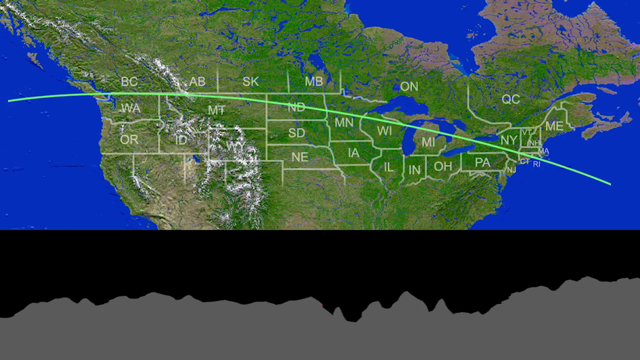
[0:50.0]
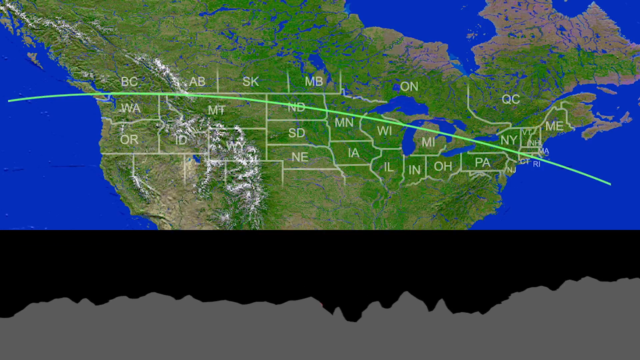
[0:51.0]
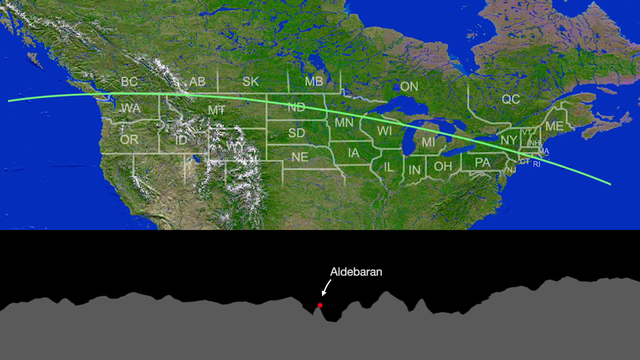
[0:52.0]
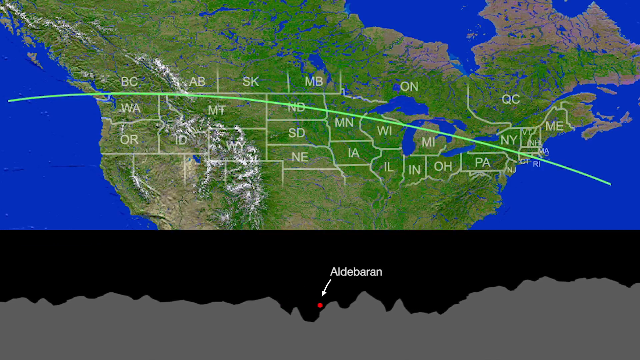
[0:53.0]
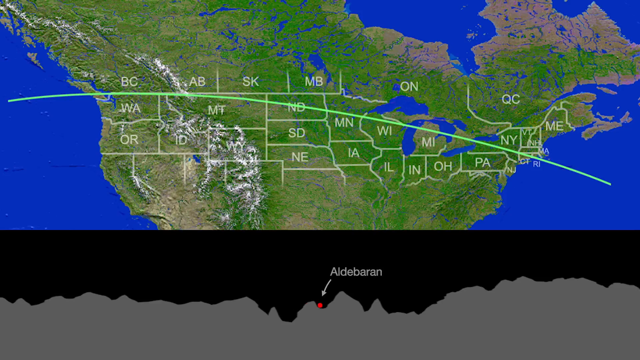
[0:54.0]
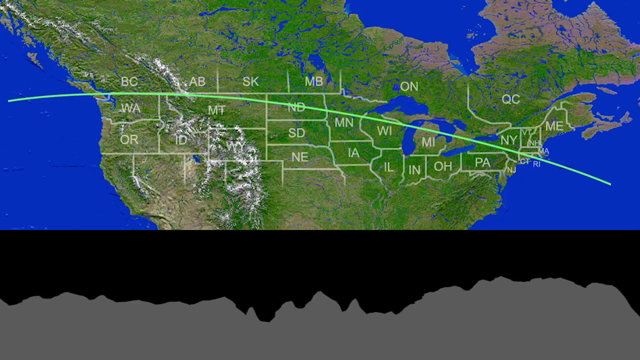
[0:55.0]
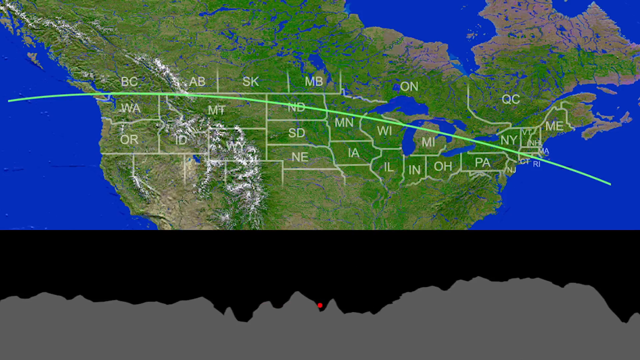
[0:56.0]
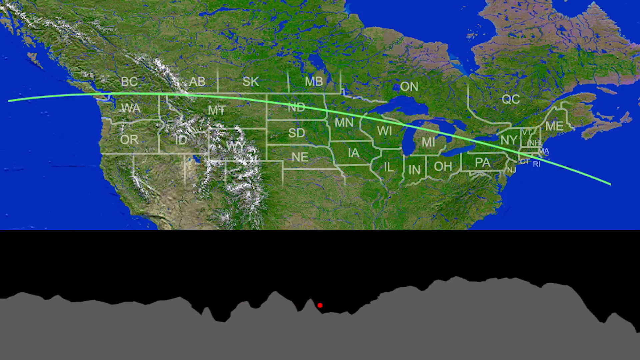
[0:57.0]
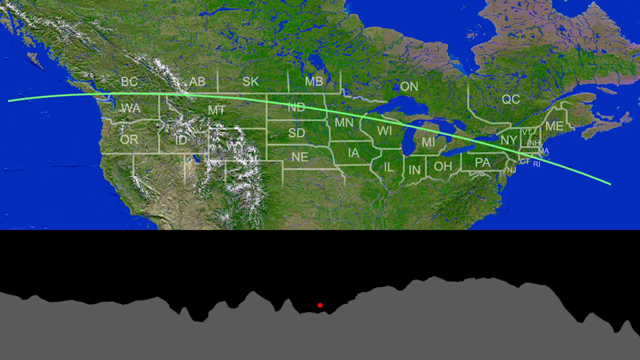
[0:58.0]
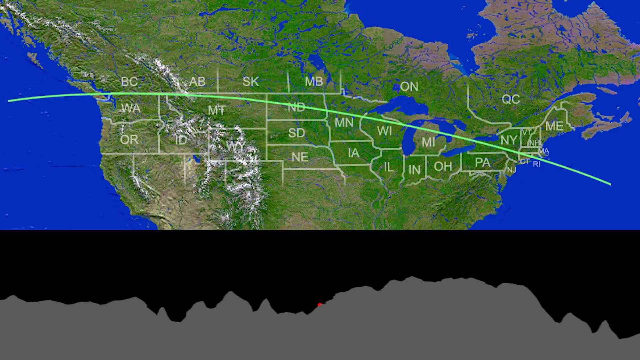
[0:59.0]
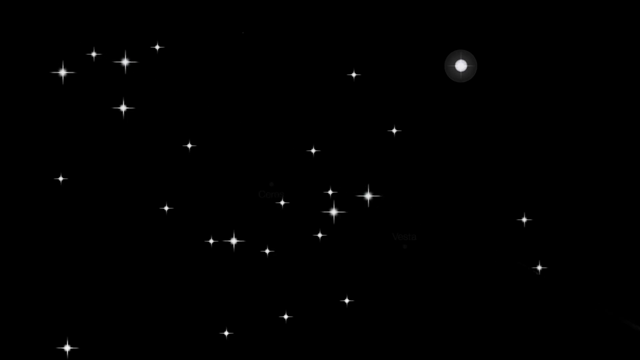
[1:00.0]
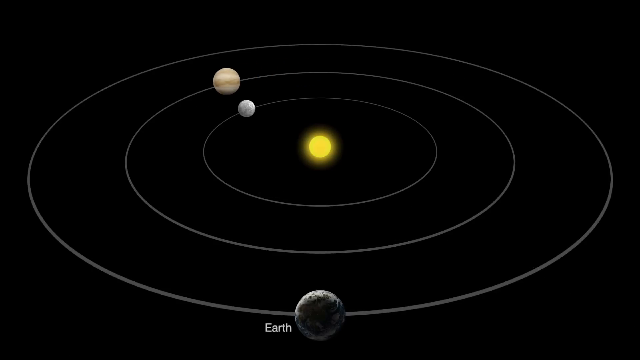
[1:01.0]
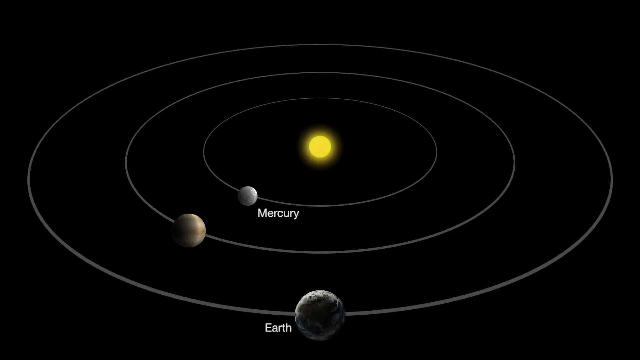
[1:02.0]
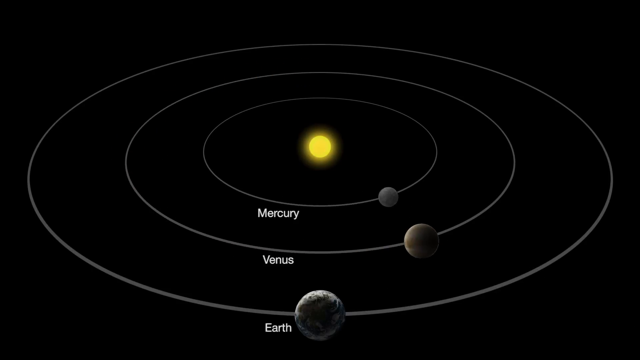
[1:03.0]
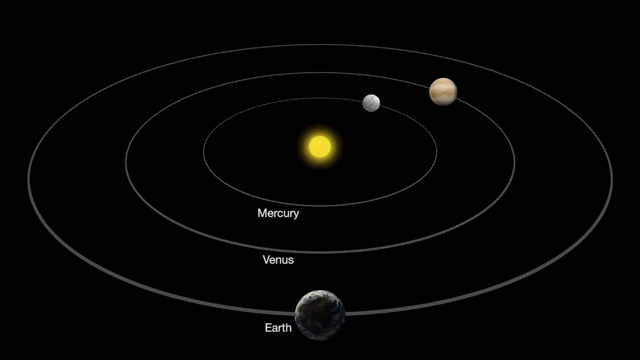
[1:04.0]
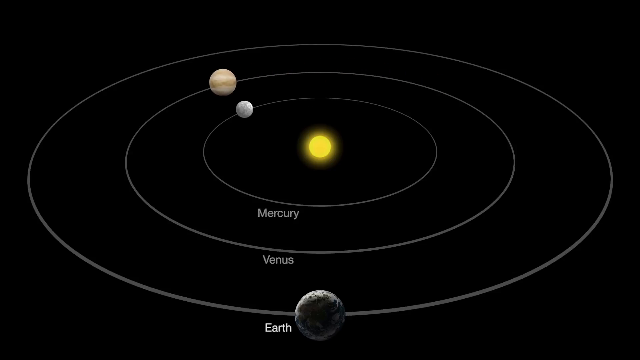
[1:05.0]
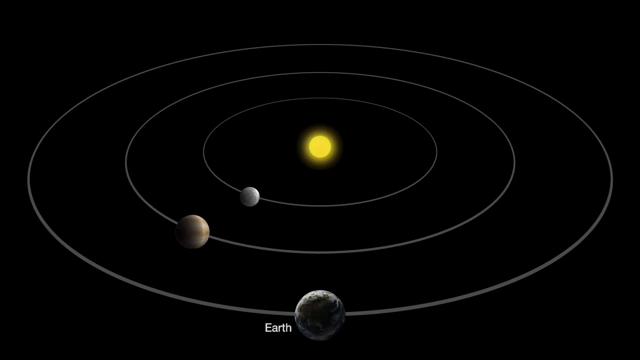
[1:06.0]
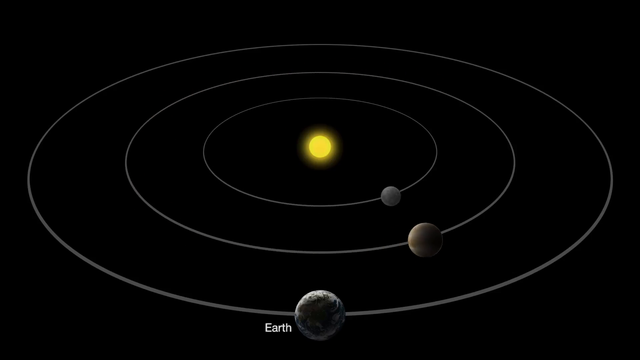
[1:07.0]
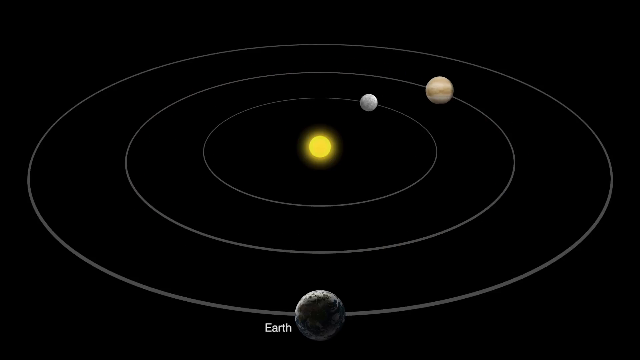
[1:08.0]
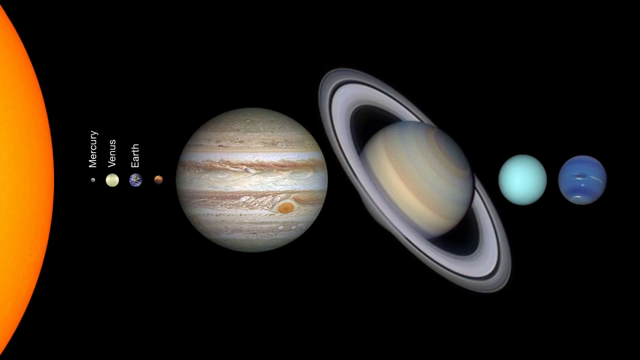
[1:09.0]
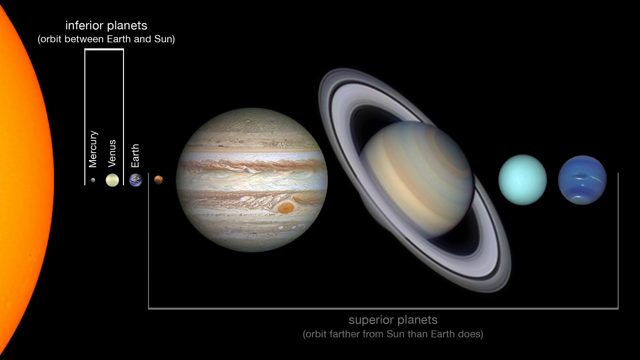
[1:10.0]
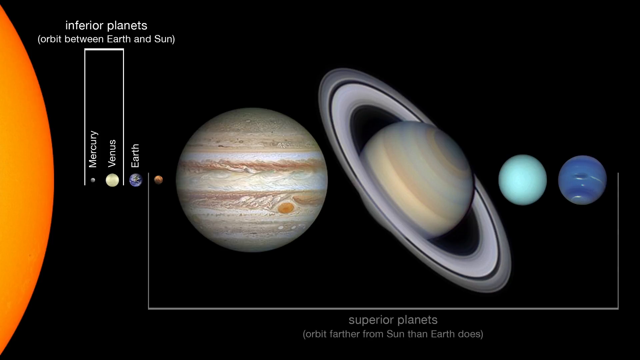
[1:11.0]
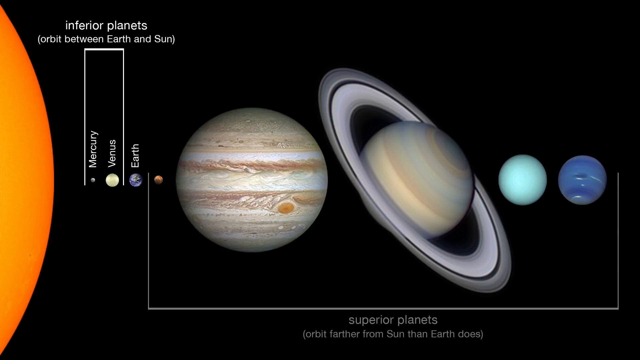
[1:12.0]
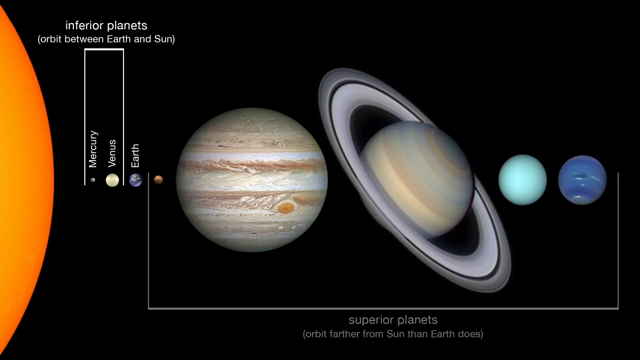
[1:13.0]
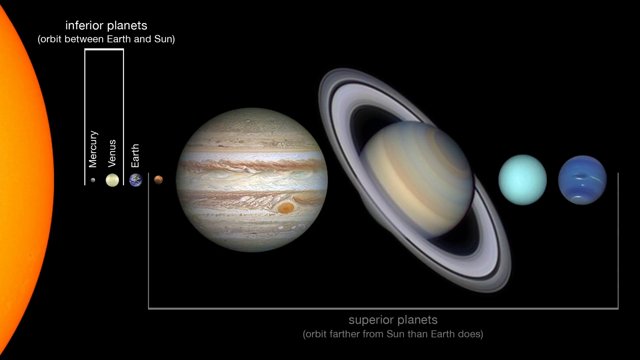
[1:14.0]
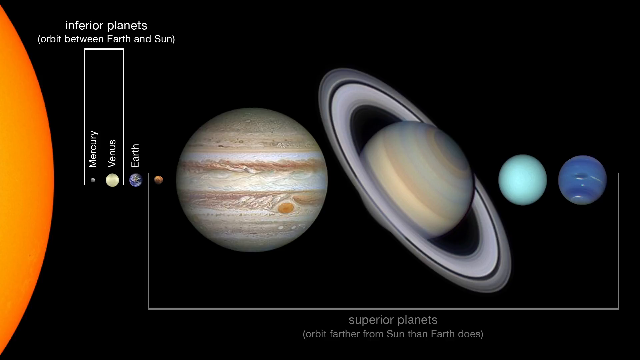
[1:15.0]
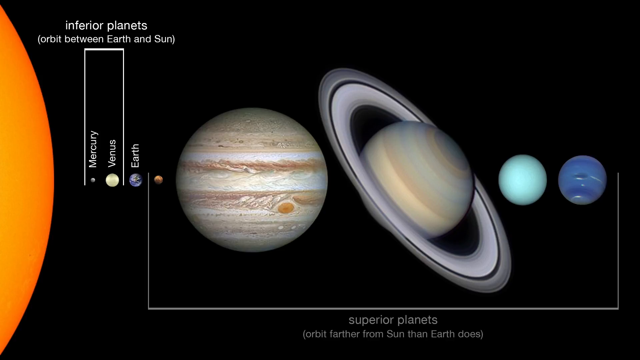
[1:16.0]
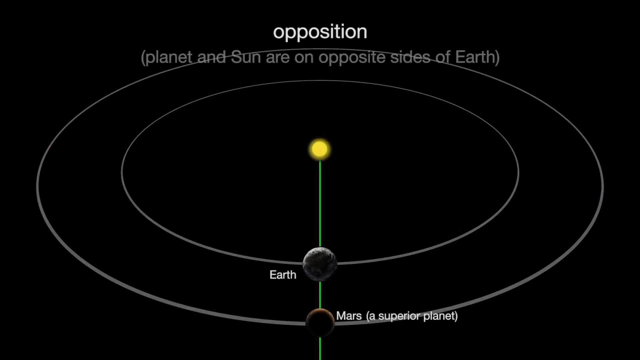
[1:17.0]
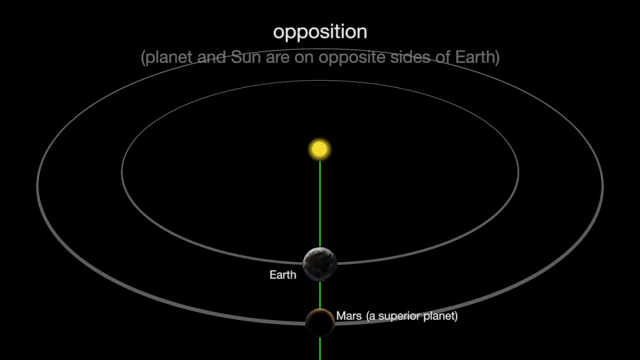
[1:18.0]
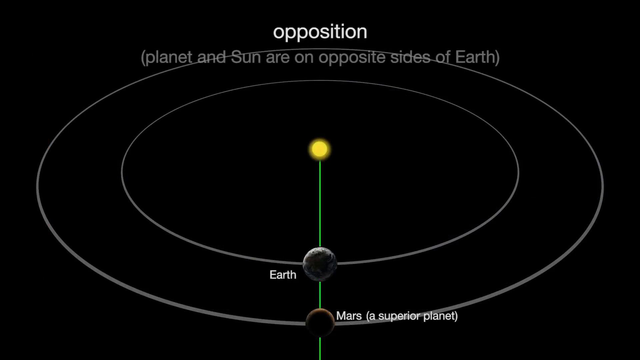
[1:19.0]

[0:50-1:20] More footage of the United States and the line is shown. At the very bottom, the same red dot labeled Aldebaran appears, but this time not over space: a cracked, mountainous filter is placed over it, apparently showing the visibility and how it will be covered by clouds. A diagram of the solar system follows, showing Earth, Mercury, Venus and the Sun; Mercury and Venus rotate around very quickly while Earth stands still at the bottom. A big diagram of many of the planets then shows two planets, Mercury and Venus, highlighted in a square or rectangular vertical box and labeled "inferior planets".